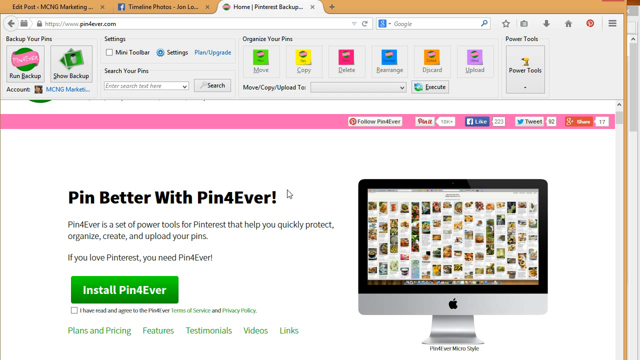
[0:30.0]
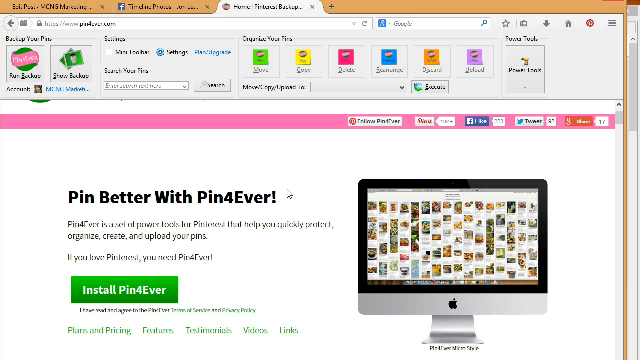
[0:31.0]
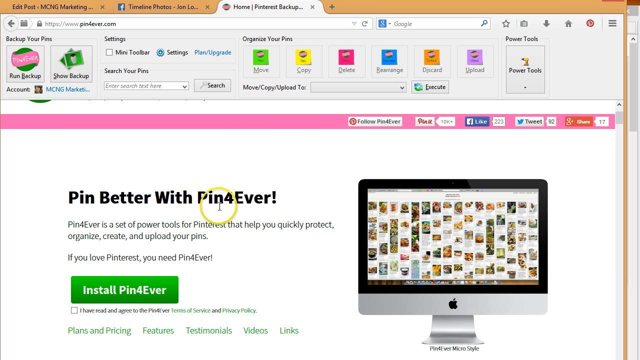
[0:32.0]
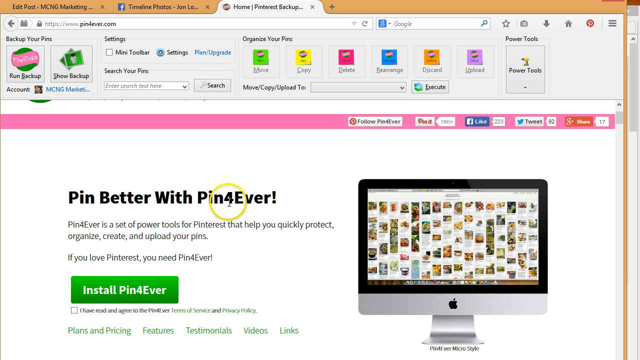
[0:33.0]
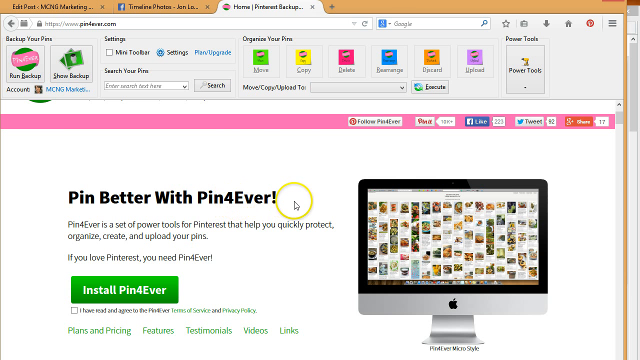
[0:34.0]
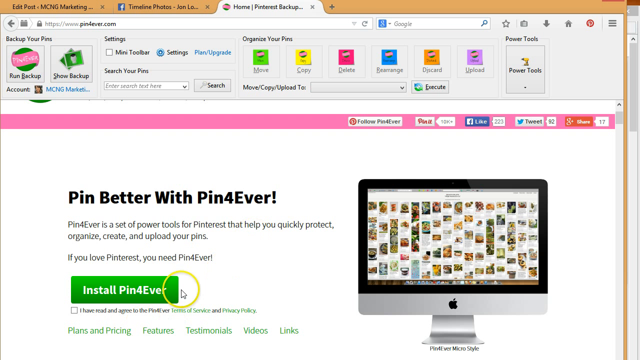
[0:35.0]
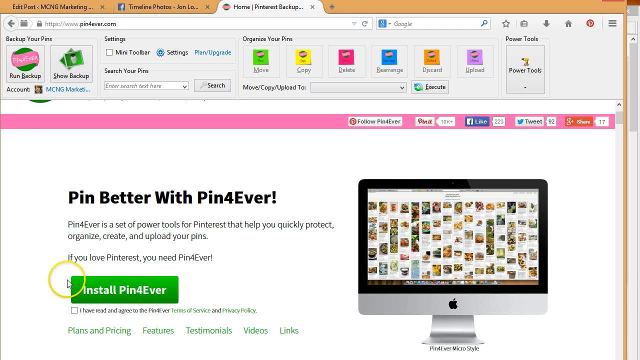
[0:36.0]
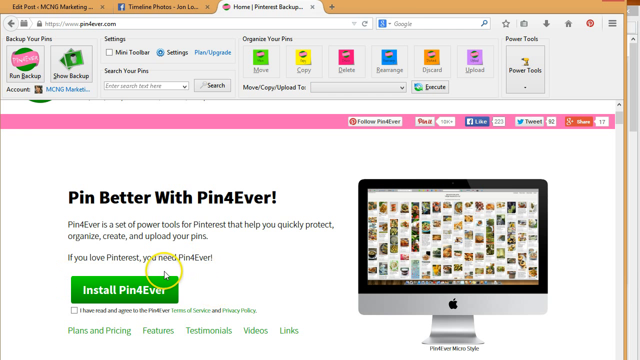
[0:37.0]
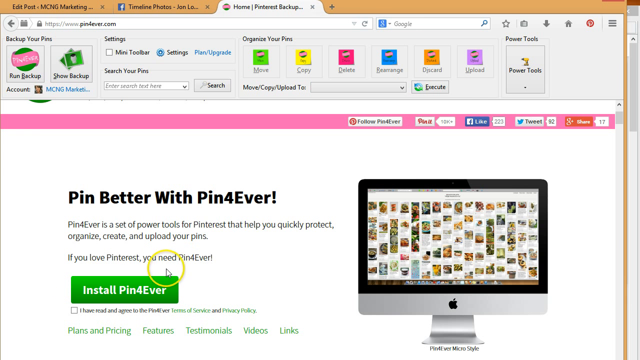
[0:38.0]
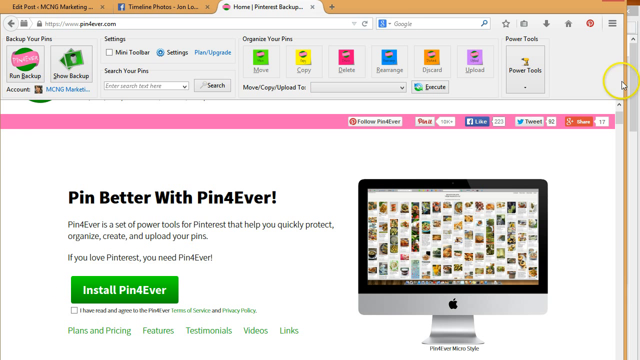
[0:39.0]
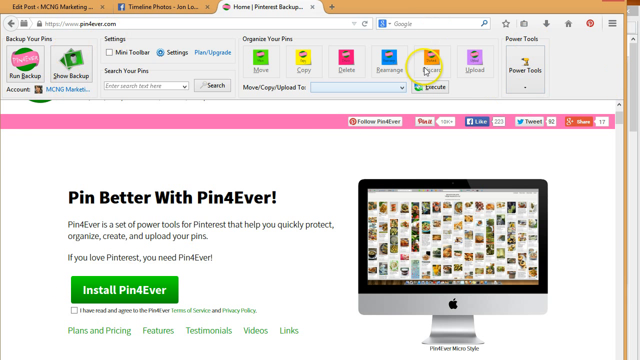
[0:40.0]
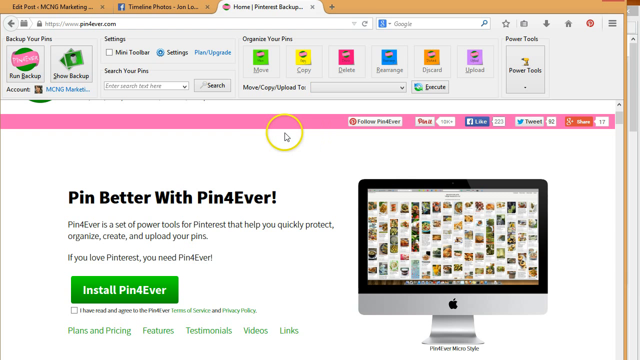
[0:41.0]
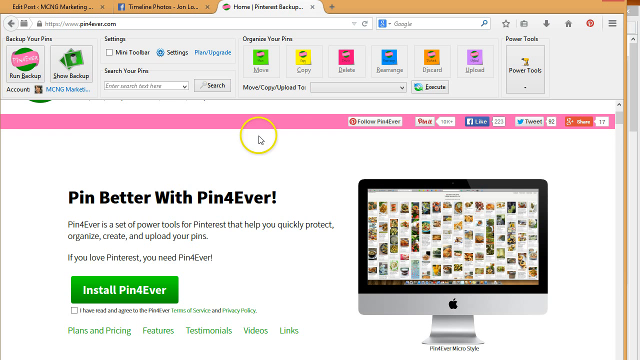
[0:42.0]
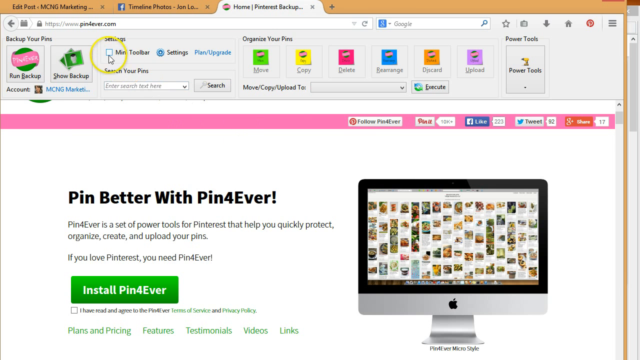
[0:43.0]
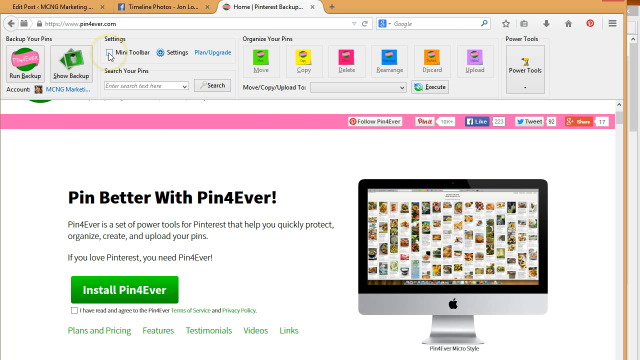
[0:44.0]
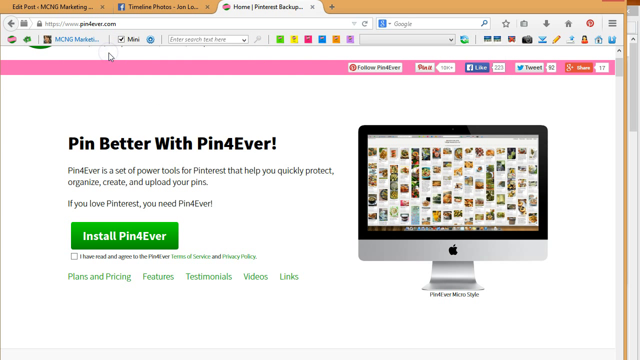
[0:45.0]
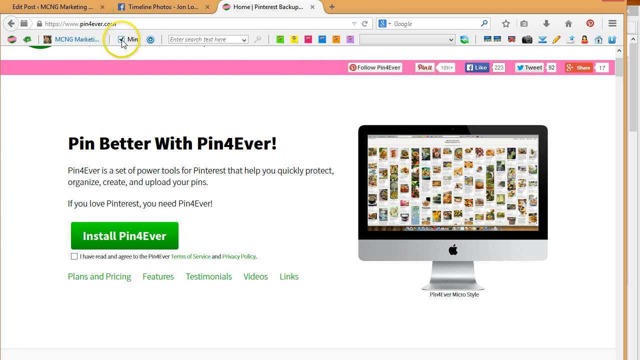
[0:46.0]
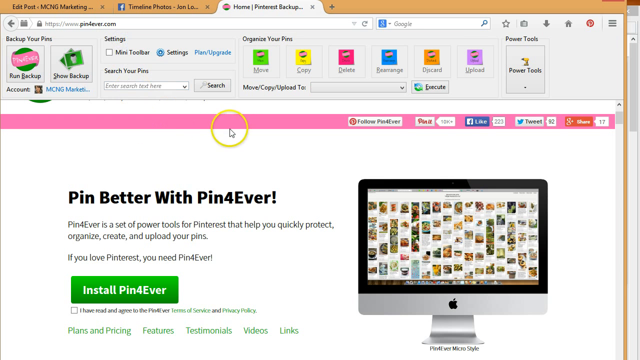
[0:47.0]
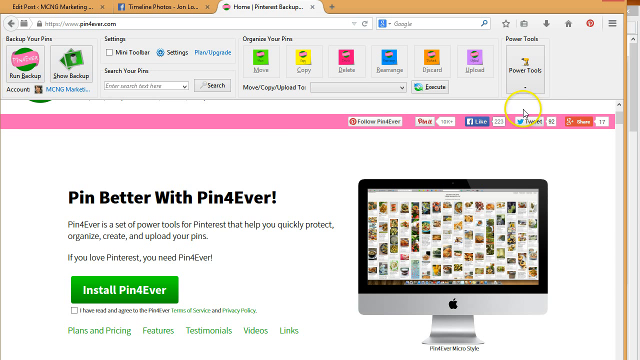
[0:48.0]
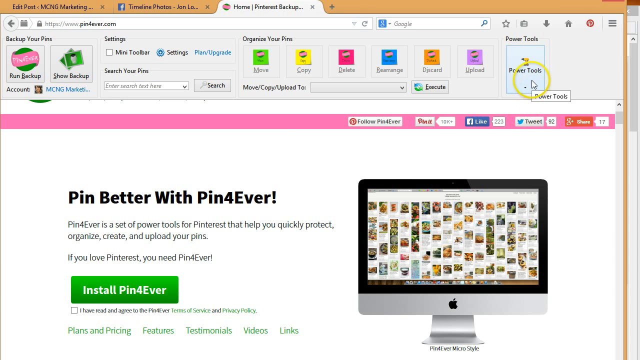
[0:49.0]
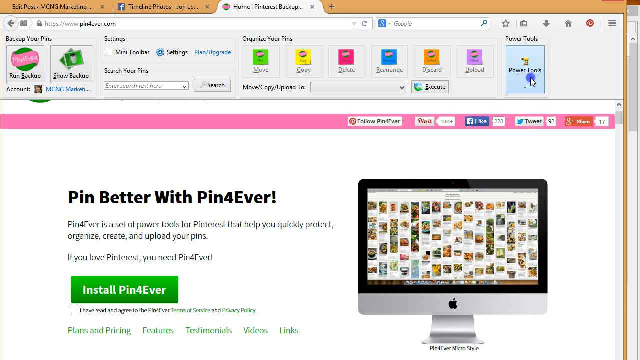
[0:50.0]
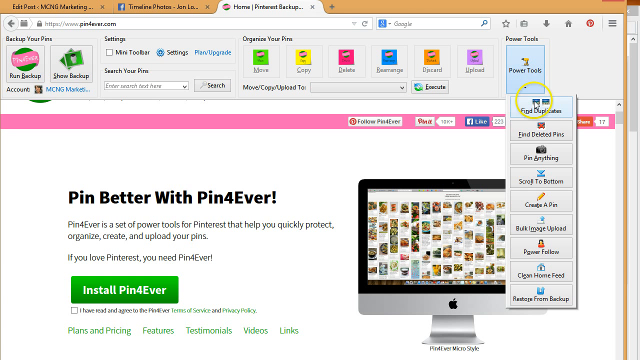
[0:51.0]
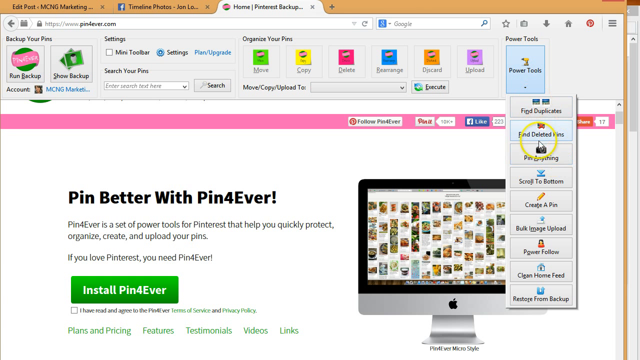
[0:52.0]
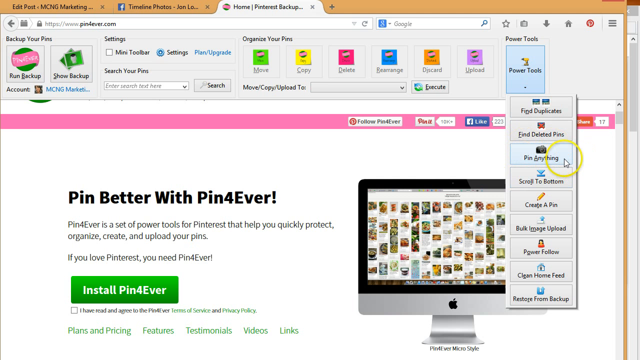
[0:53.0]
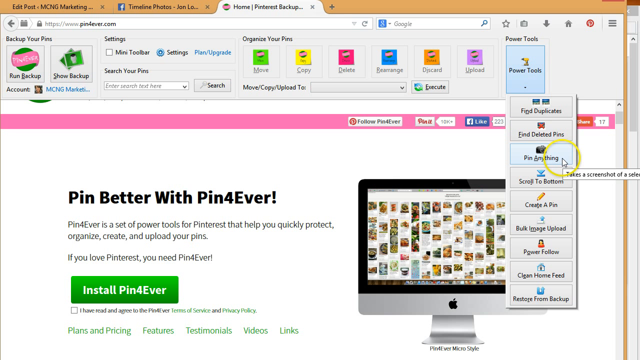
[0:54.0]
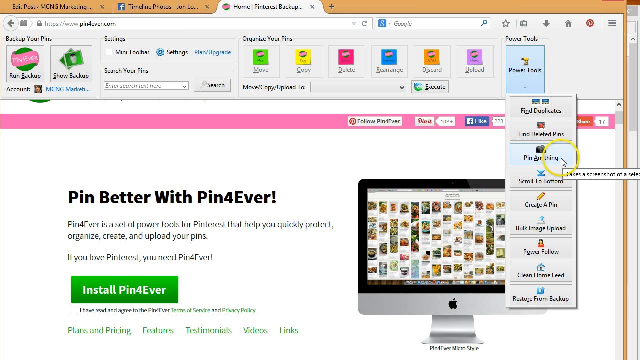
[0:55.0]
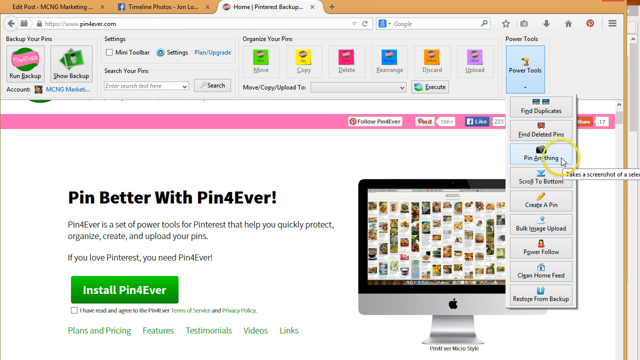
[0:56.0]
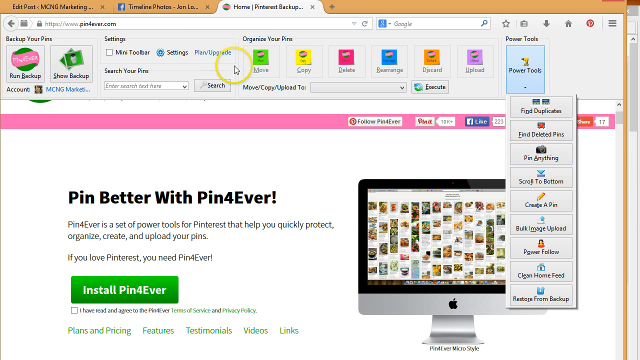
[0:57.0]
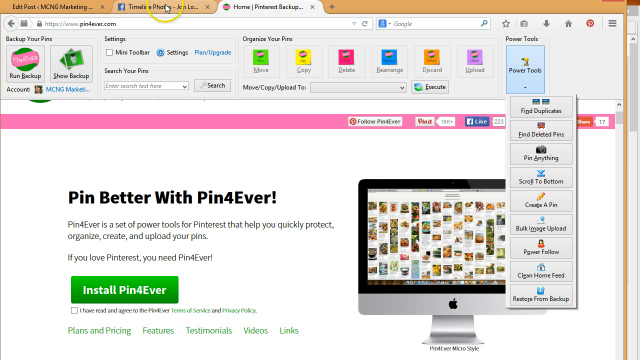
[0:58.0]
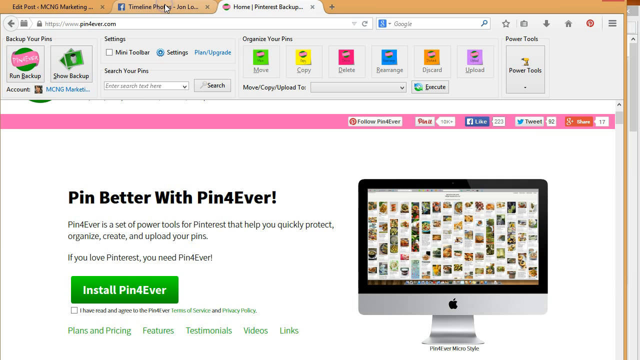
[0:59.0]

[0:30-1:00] A program page reads "pin better with pin forever" in big, bold black letters, with a green "install pin forever" bar and a box to check off as an acknowledgement. Options for plans and pricing, features, testimonials, videos, and links are available. A cursor clicks on all different things, including different browsers, bringing up different websites, and various pop-ups appear on the right-hand side of the screen. The person looks like they are going to install the program. The cursor moves around, clicks on settings and then another setting, hits power tools, and clicks a selection from a list that comes up vertically, after which another website appears.